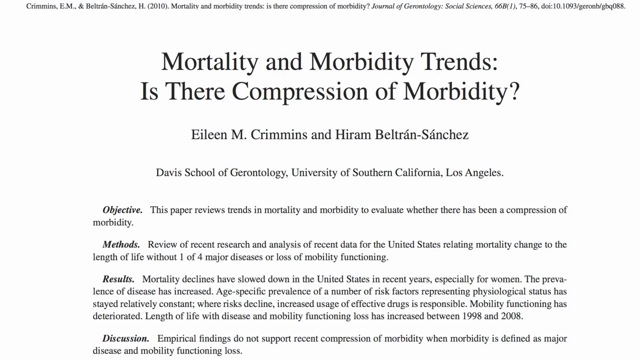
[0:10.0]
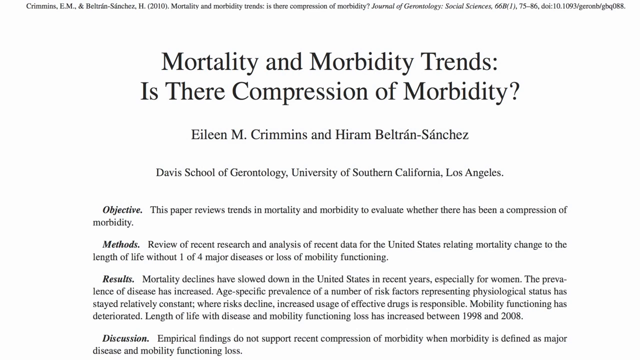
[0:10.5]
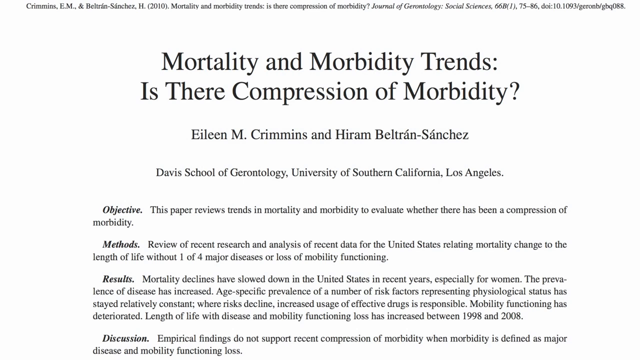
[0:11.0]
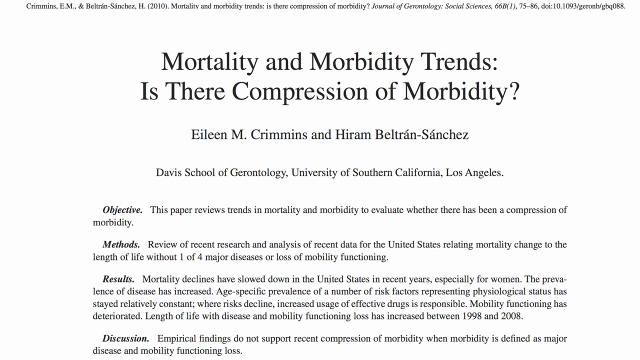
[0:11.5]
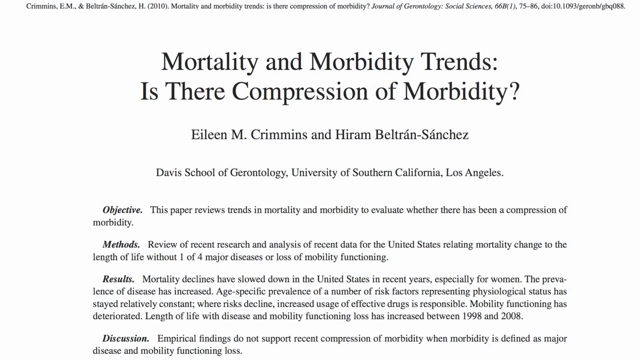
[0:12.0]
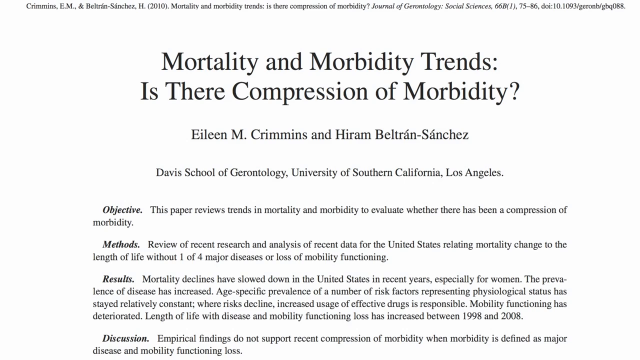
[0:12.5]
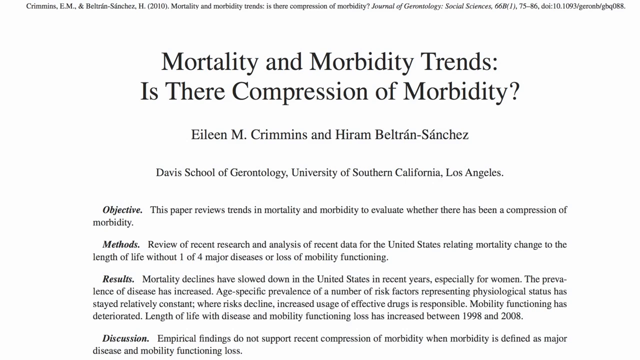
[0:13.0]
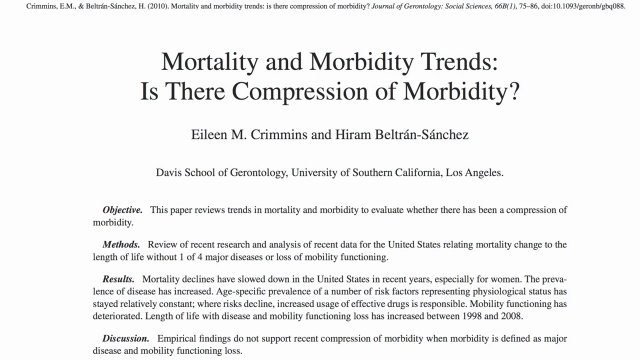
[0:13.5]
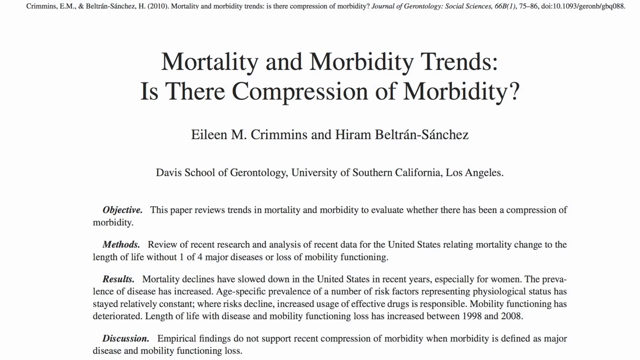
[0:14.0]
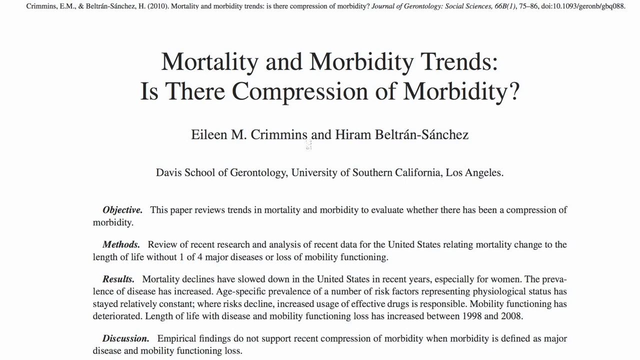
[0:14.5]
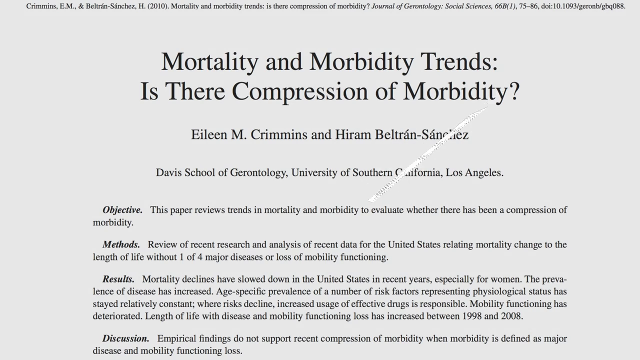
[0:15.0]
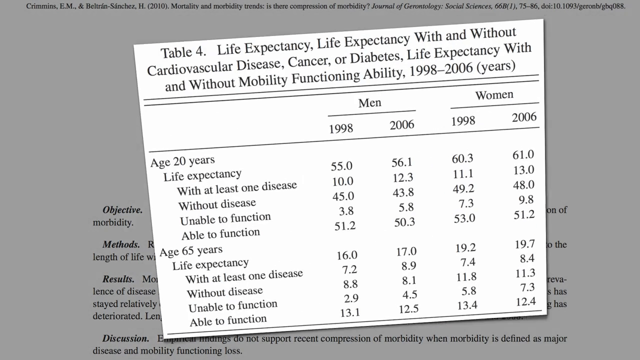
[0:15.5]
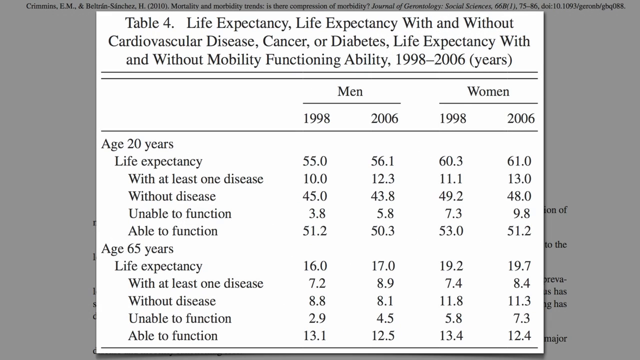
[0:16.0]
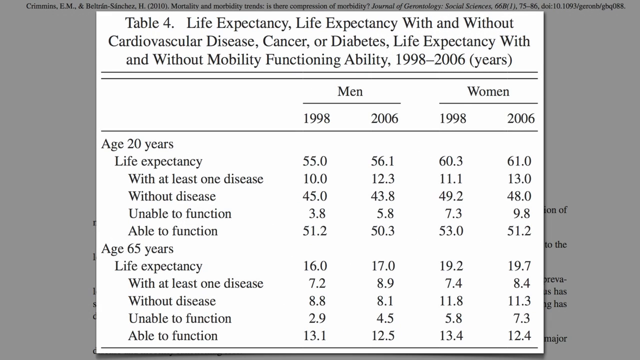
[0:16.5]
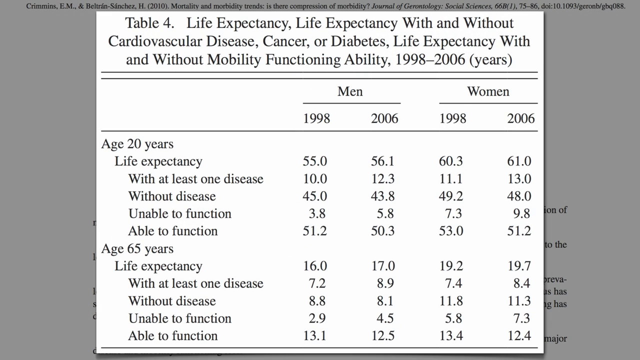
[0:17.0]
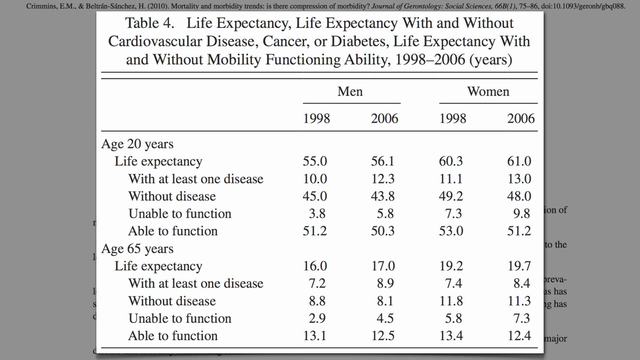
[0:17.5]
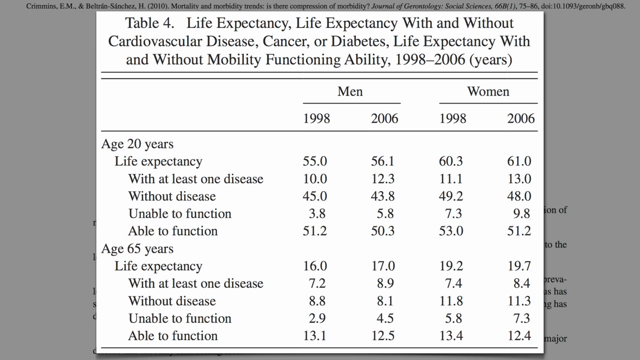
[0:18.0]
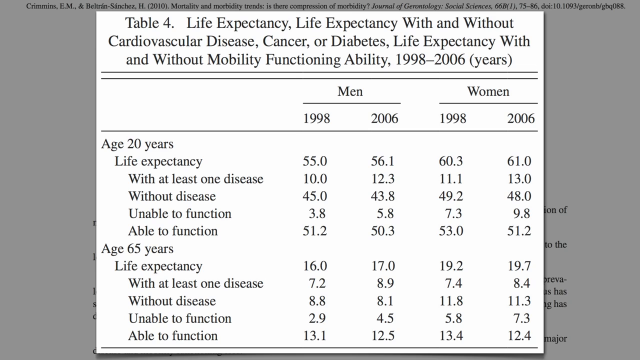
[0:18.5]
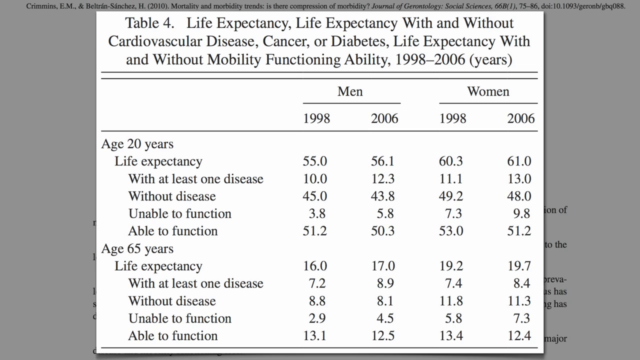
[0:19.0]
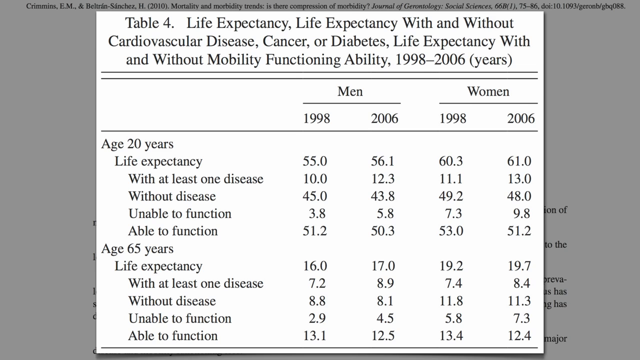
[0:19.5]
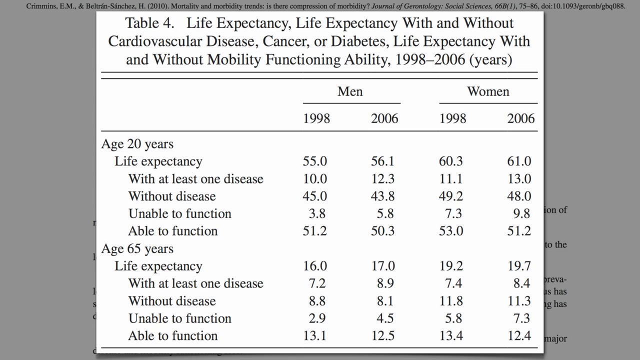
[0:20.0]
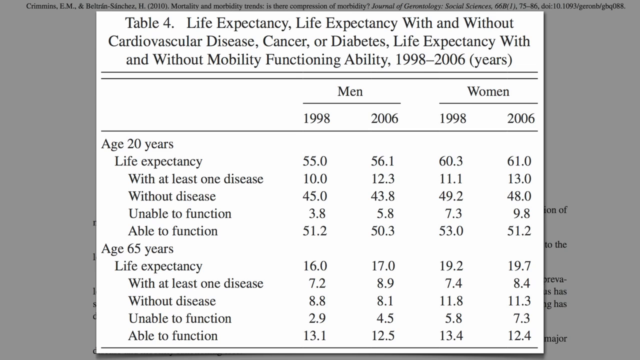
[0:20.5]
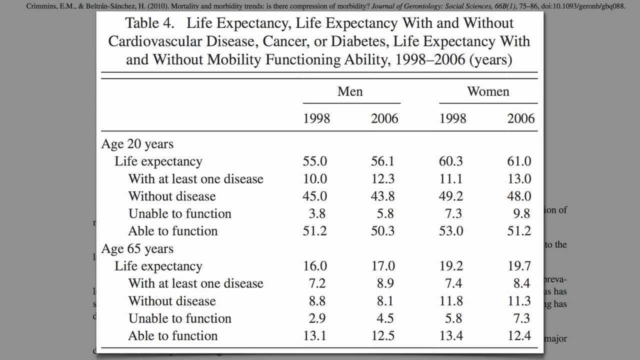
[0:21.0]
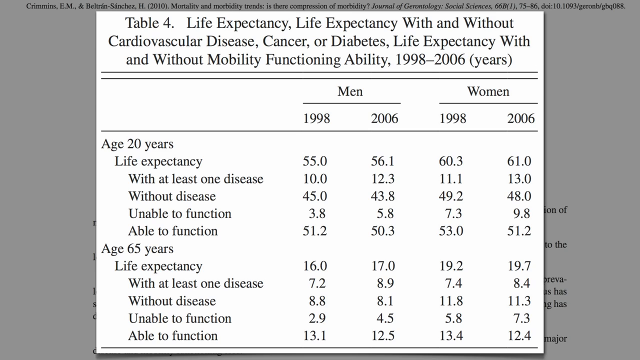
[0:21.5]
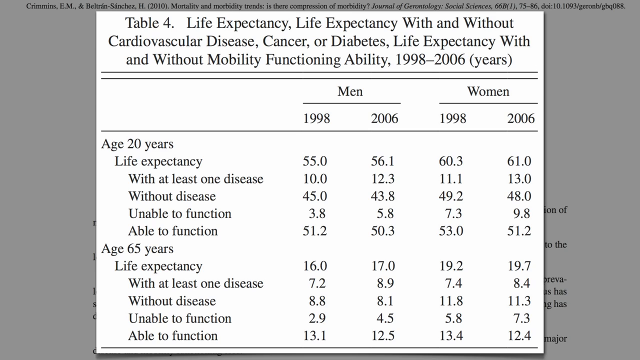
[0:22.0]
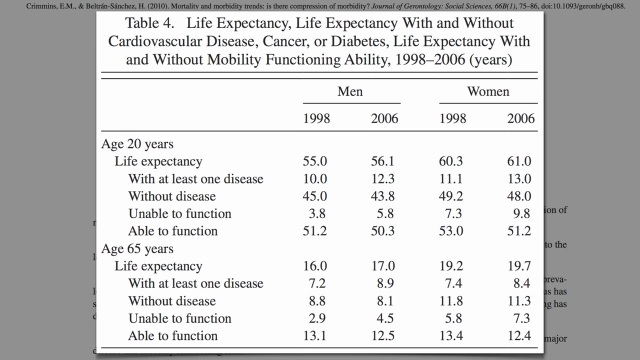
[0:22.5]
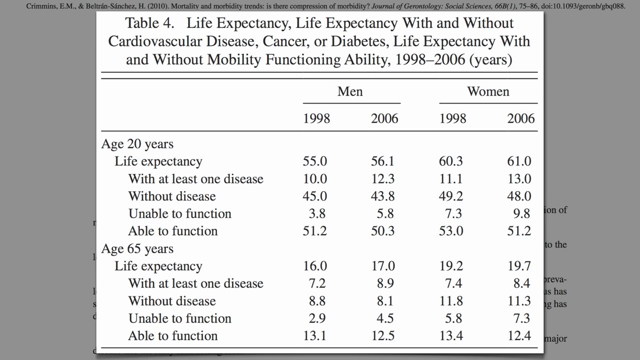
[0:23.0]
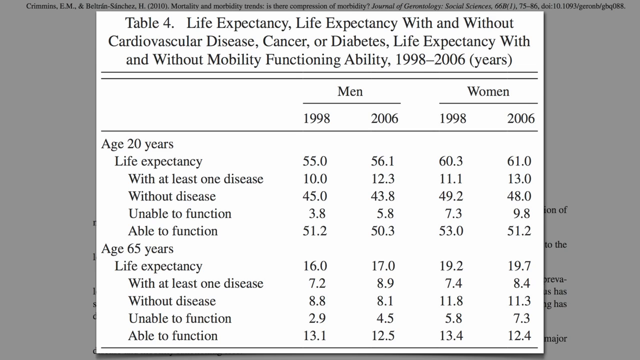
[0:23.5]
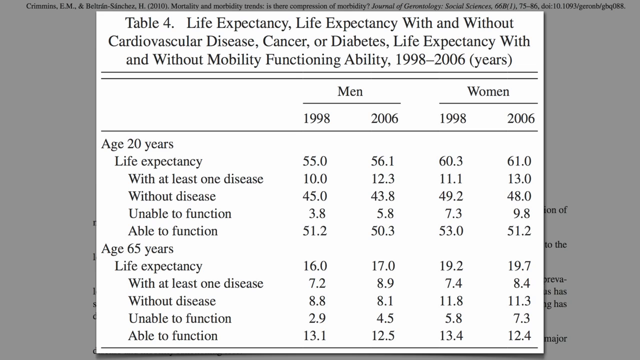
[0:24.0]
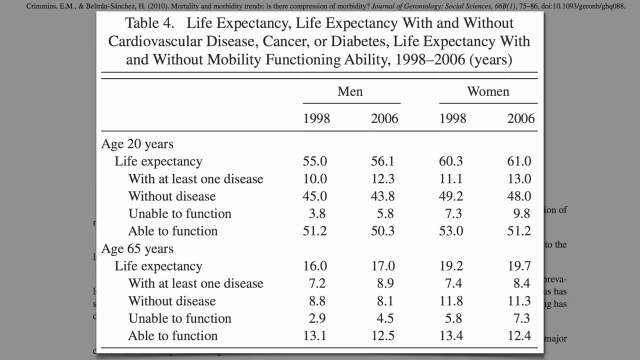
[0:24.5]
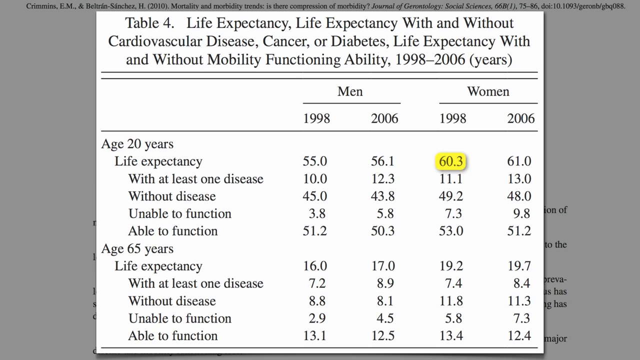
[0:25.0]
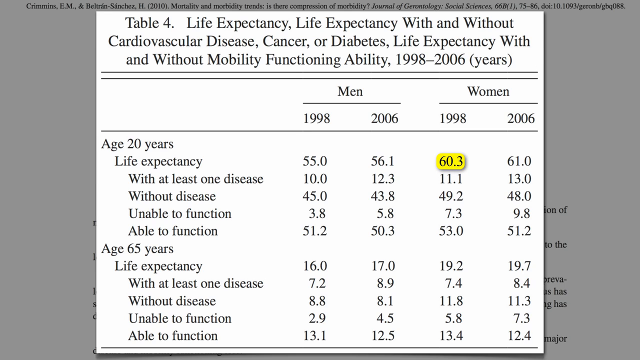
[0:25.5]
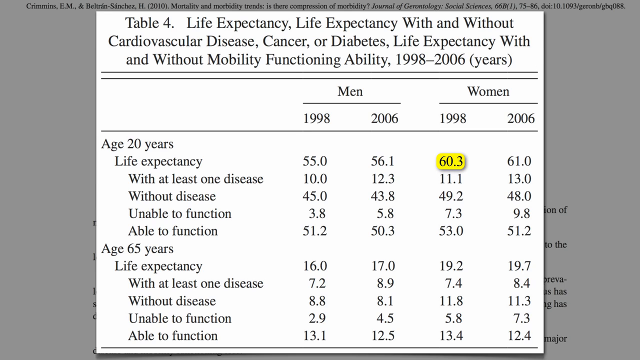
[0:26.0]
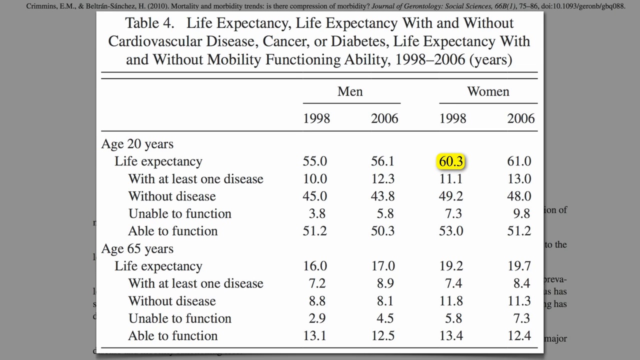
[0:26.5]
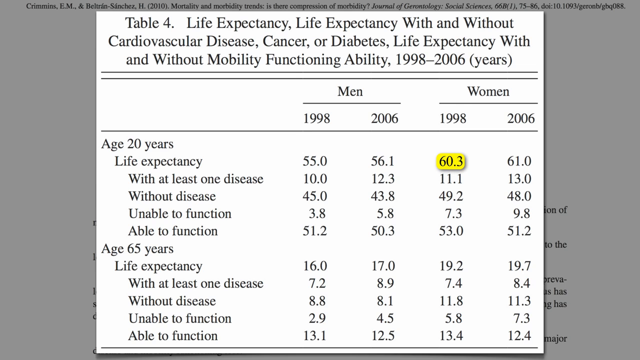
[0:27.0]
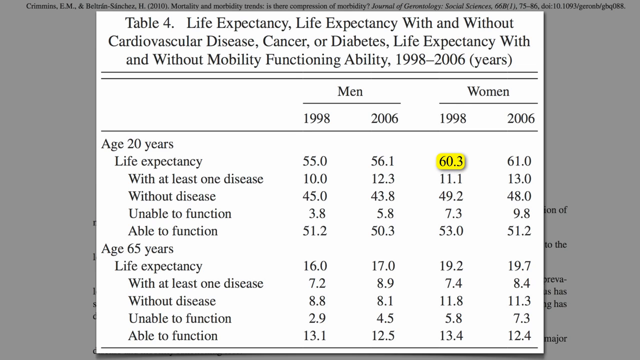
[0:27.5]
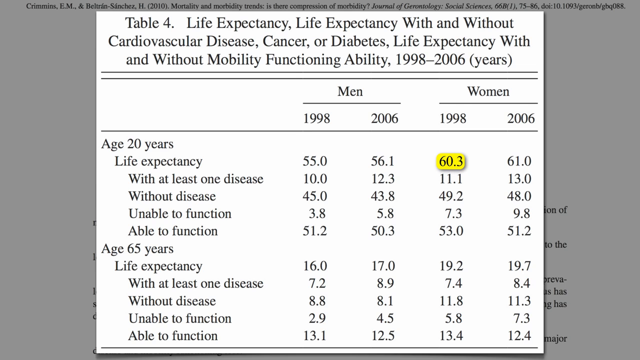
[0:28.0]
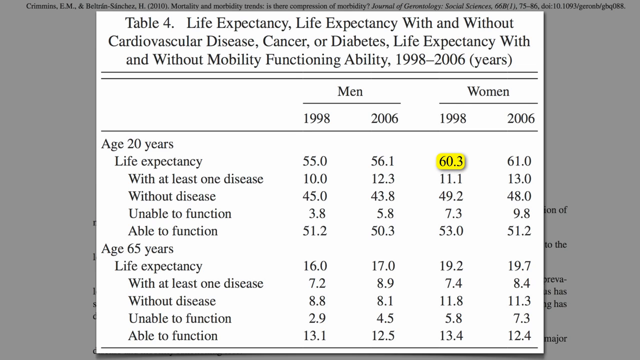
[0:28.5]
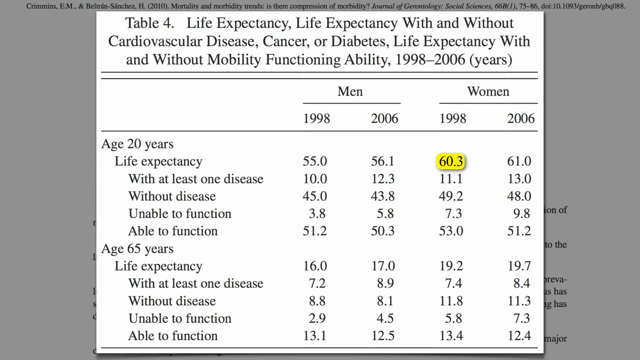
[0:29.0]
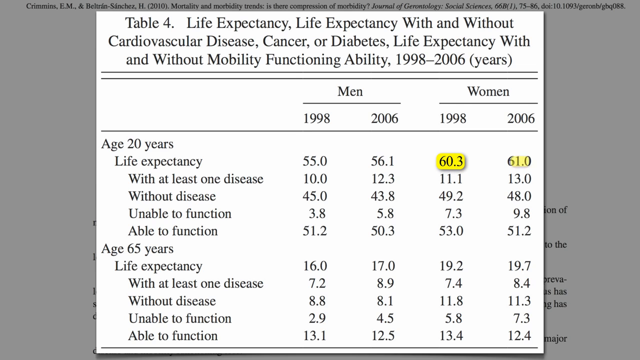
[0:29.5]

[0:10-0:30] More of the same article is shown; it appears to be a research paper. The text states that the work was done at the Davis School of Gerontology and the University of Southern California, Los Angeles, and that the objective of the paper is "to review trends in mortality and morbidity to evaluate whether there has been a compression of morbidity." An animation seems to show a piece of paper flying toward the viewer. A blown-up table follows, showing life expectancy with and without cardiovascular disease, cancer and diabetes, and life expectancy with and without mobility and functioning ability, from 1998 to 2006. The table has two categories, men and women. For men at age 20 years, life expectancy is 55 in 1988 and 56.1 in 2006. For women, it is 60.3 in 1988 and 61.0 in 2006.